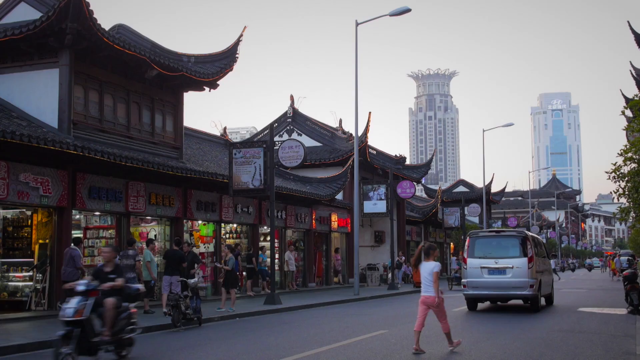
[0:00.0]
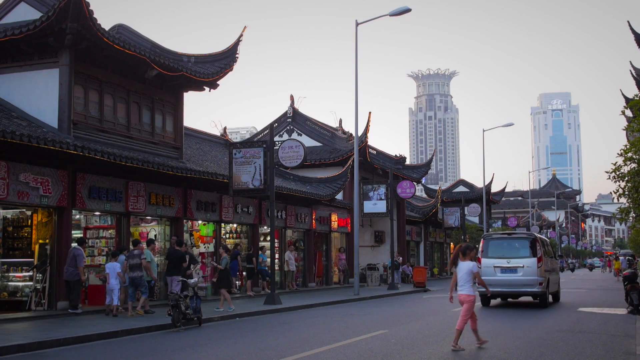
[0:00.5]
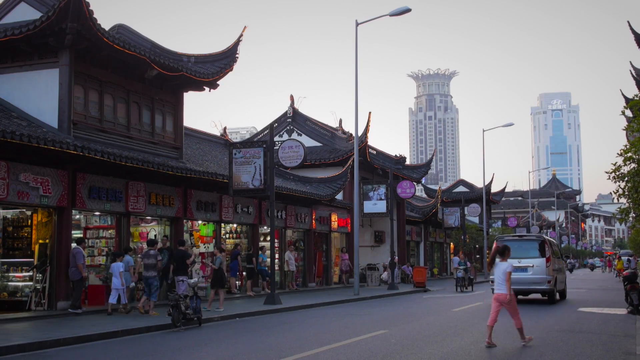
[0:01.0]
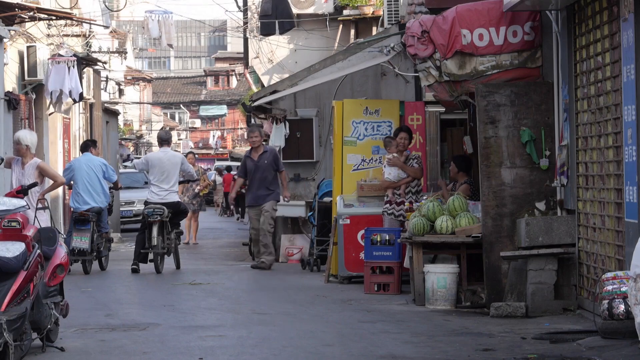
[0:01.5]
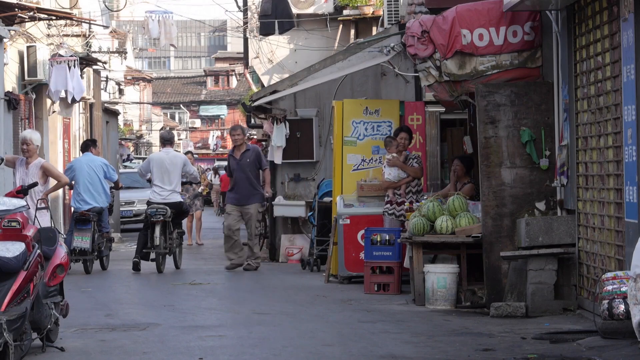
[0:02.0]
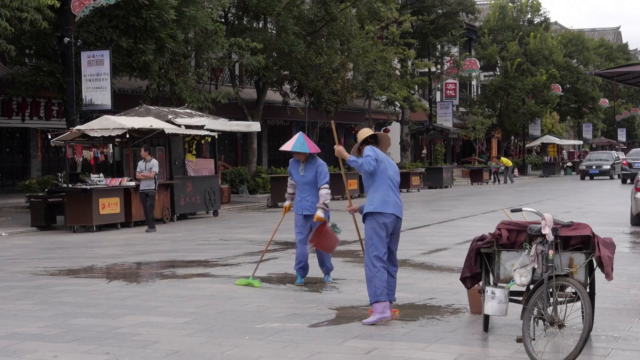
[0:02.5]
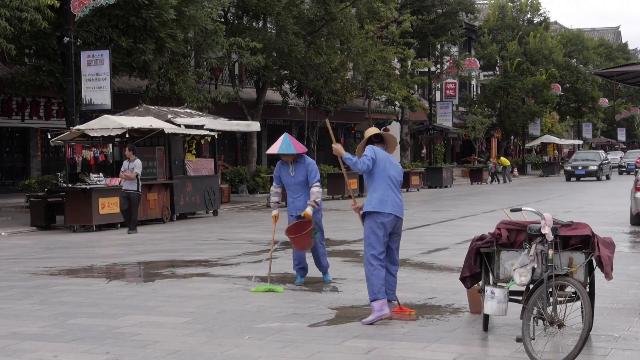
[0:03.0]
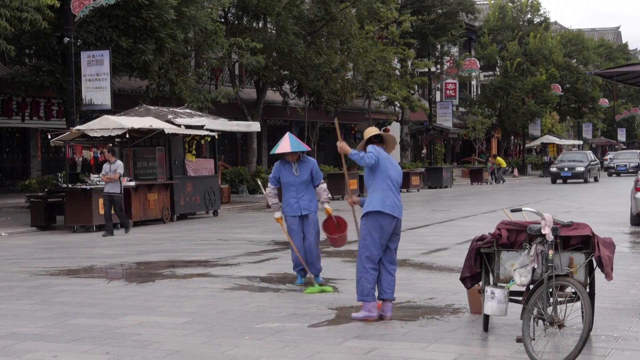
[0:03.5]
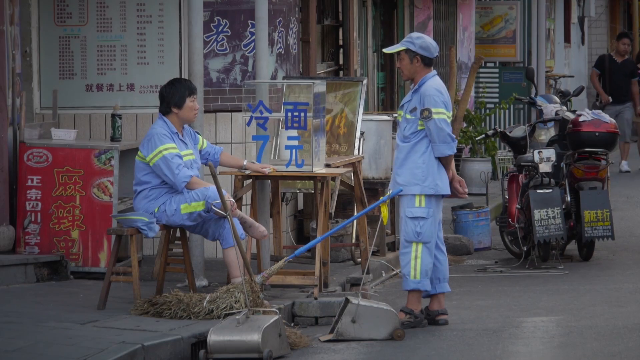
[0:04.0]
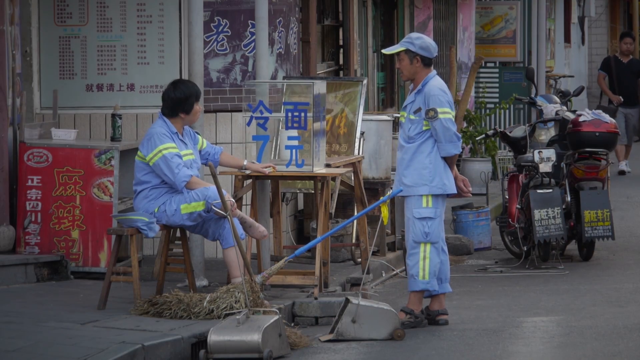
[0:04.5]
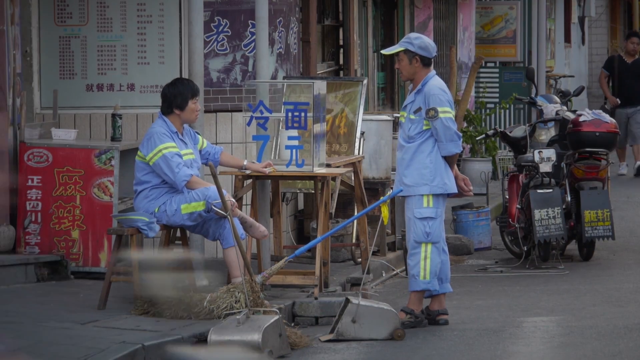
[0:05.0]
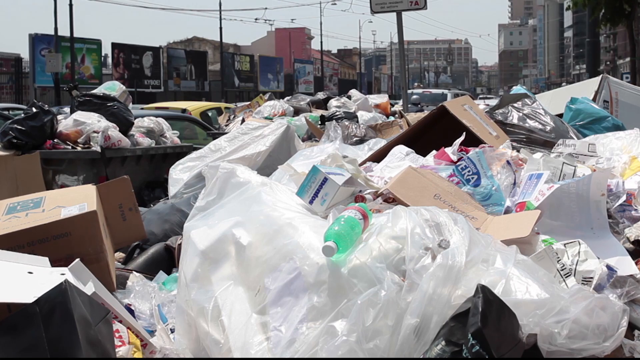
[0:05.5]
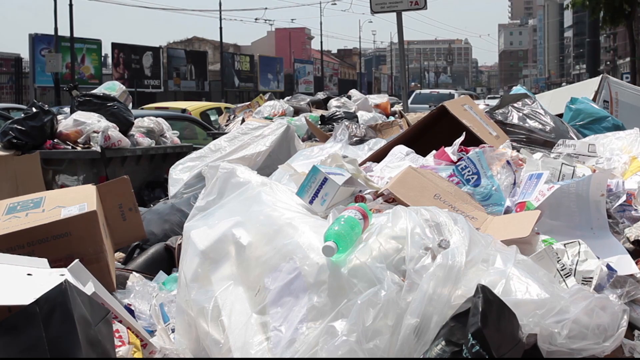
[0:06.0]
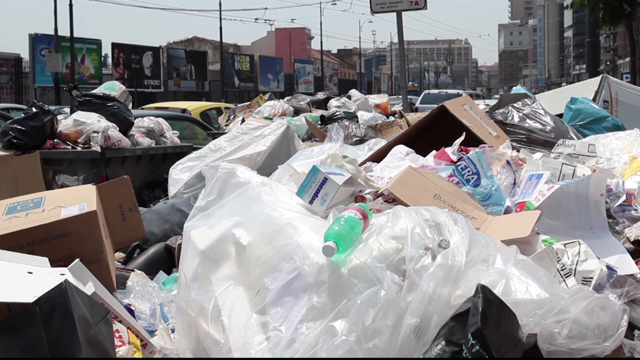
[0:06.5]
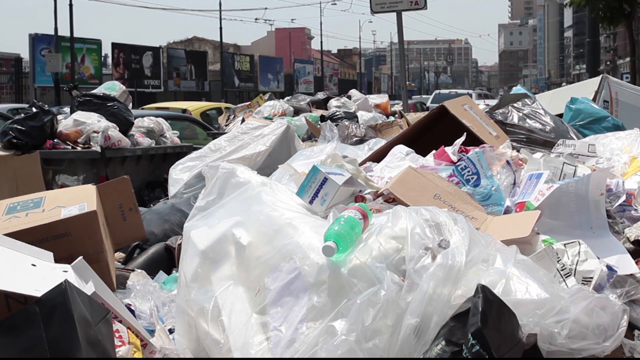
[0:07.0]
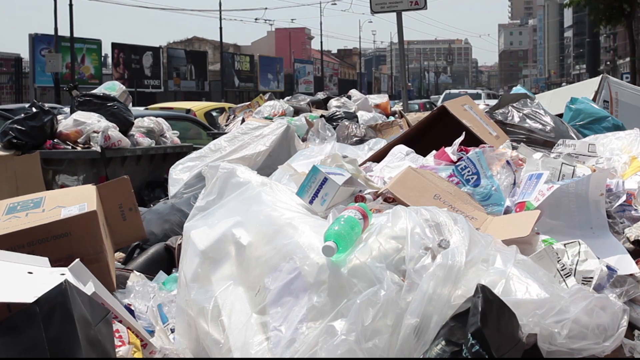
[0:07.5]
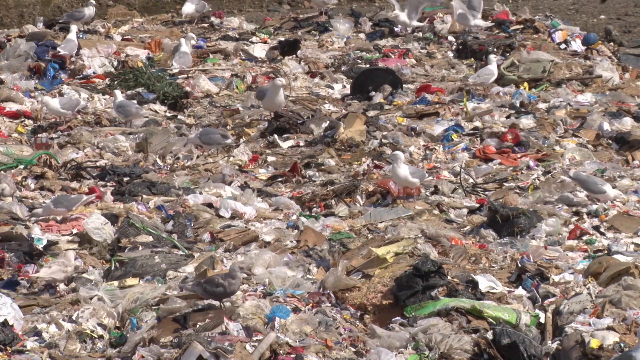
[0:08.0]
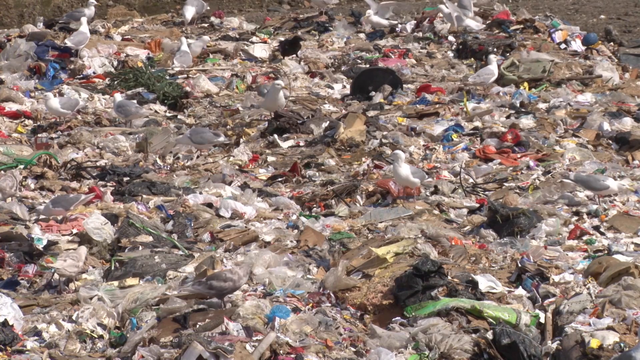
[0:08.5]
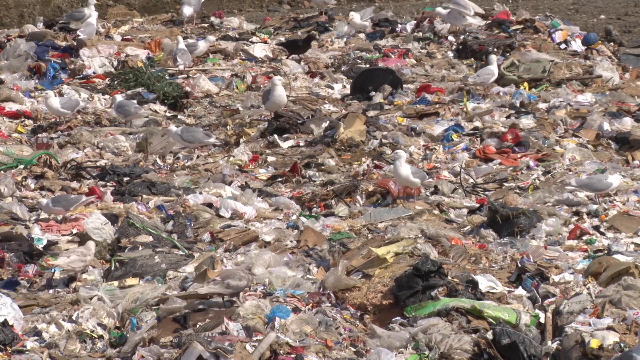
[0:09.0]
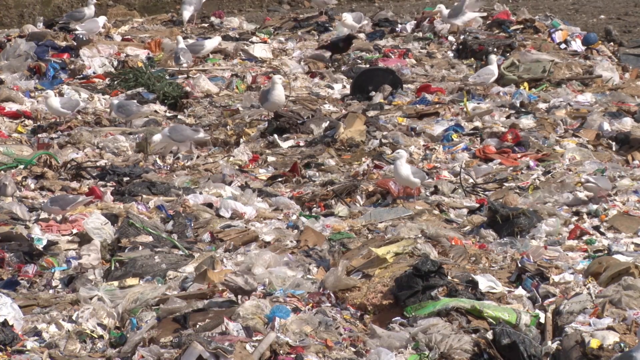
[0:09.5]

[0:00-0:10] A road in China is lined with a row of storefronts that look kind of attached to one another, all with traditional-style Chinese roofs, and taller high-rise buildings are visible in the background. Many people walk around shopping, small vendors sell fruit, and street cleaners in blue uniforms clean the street or take a rest. A lot of trash and pollution is piled up on the streets: empty bottles, plastic bags, wrappers and boxes lie in large piles. The view then shifts to a piece of land where the ground looks completely covered by trash, and white birds walk around pecking at the trash.